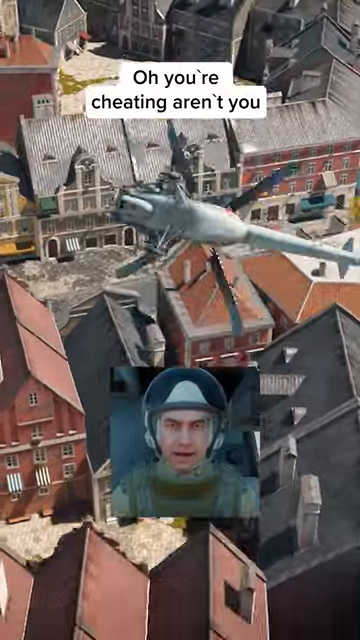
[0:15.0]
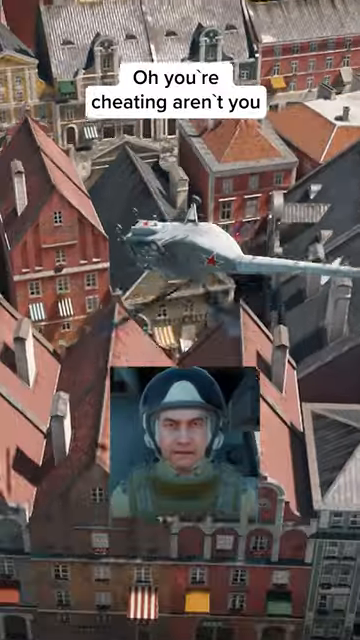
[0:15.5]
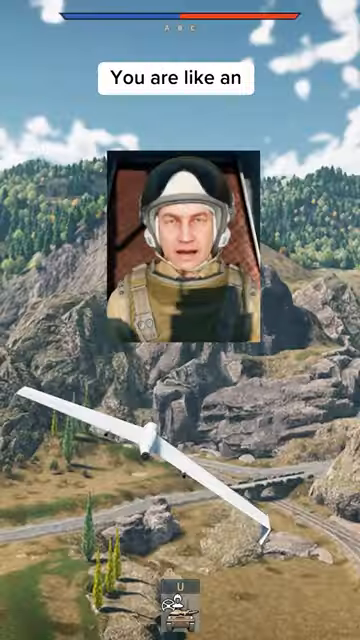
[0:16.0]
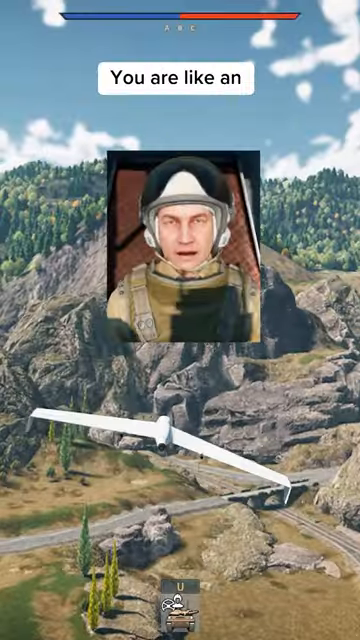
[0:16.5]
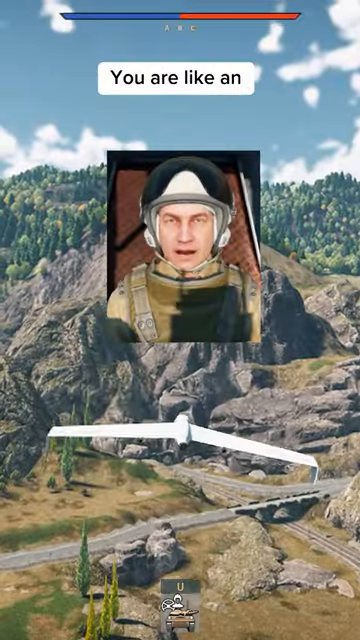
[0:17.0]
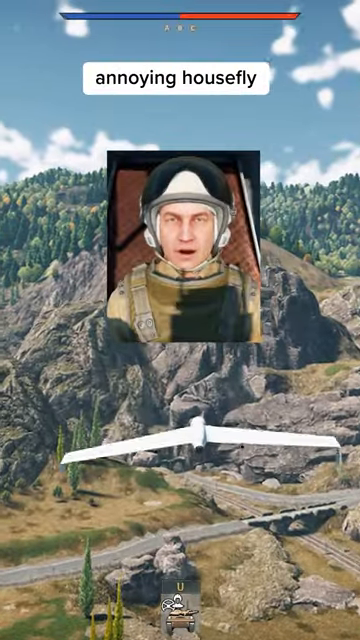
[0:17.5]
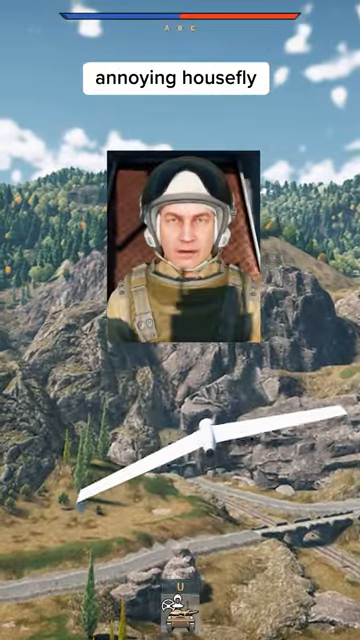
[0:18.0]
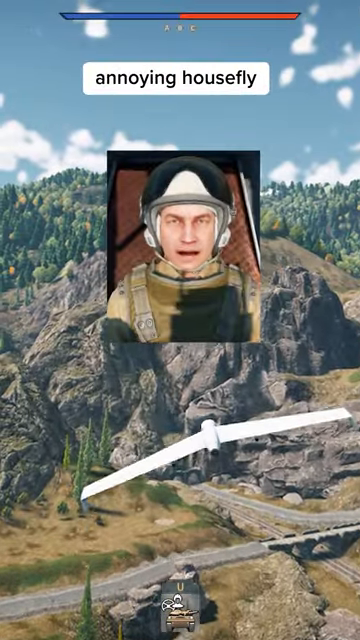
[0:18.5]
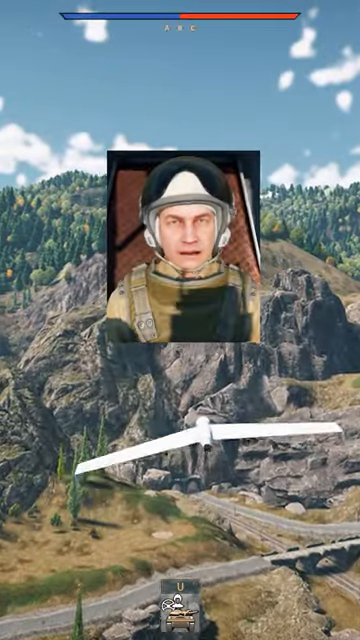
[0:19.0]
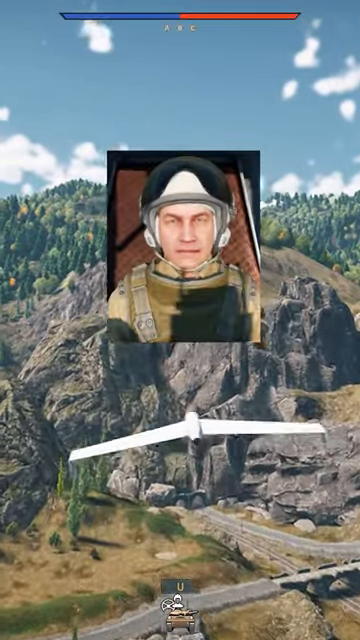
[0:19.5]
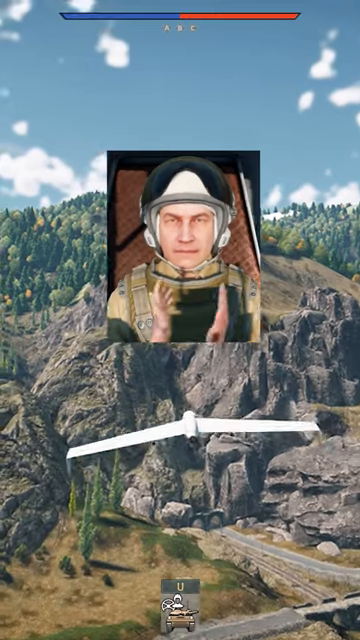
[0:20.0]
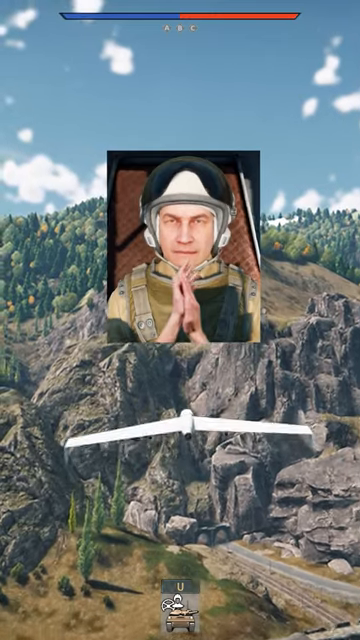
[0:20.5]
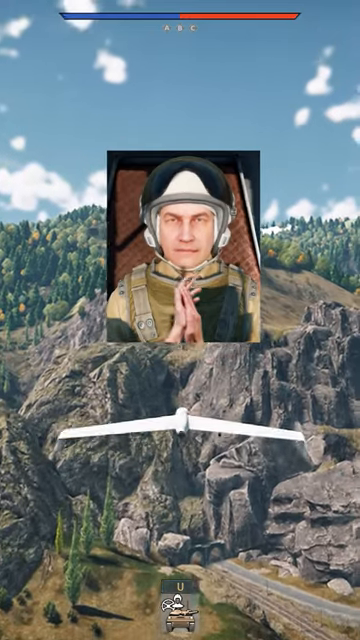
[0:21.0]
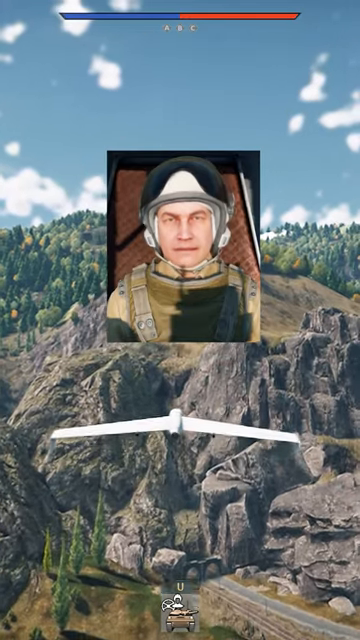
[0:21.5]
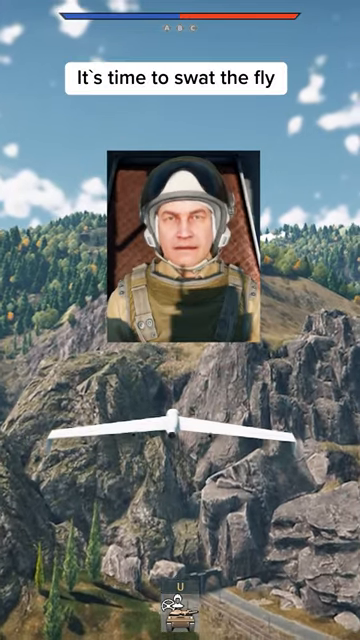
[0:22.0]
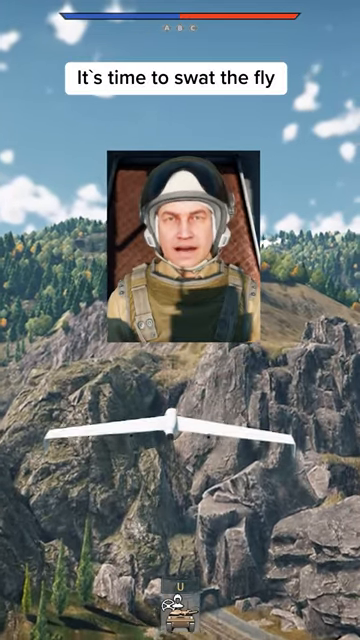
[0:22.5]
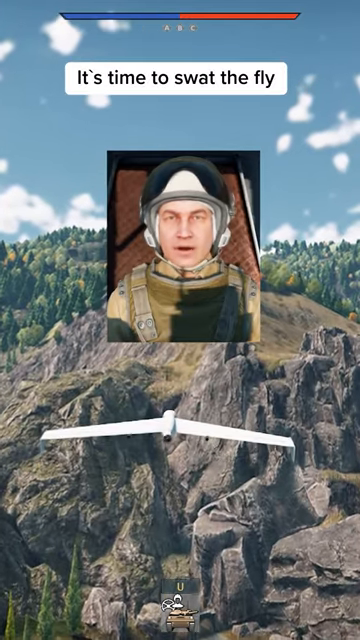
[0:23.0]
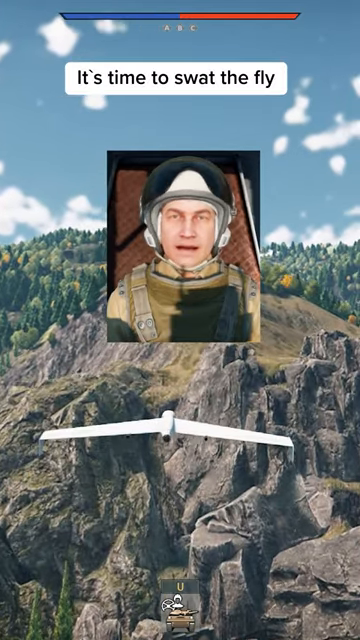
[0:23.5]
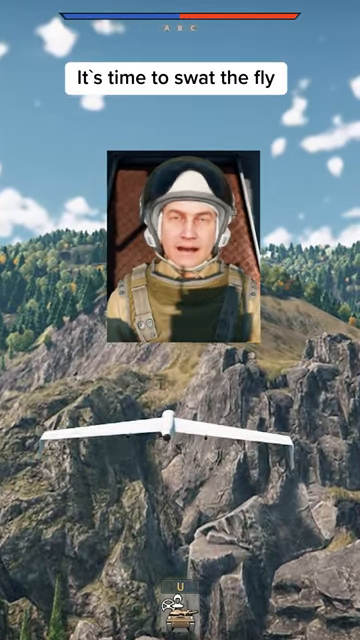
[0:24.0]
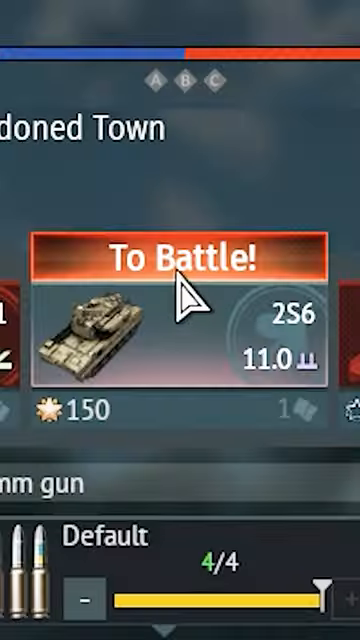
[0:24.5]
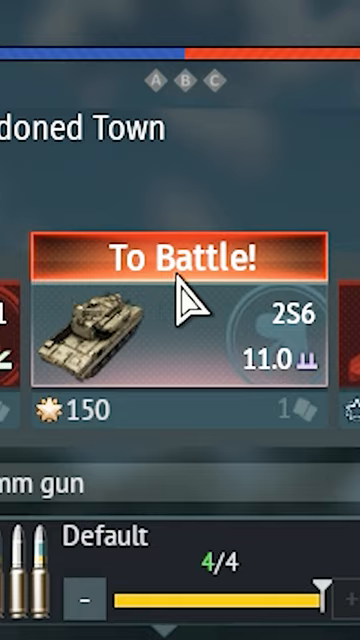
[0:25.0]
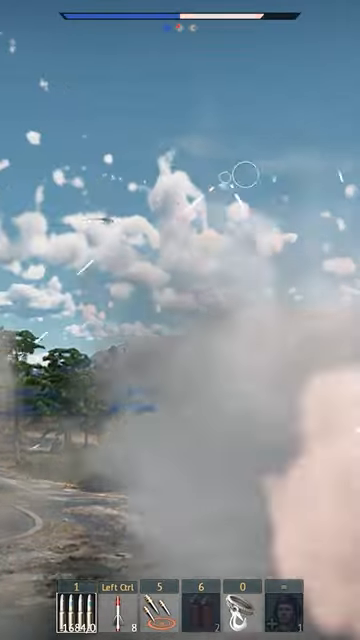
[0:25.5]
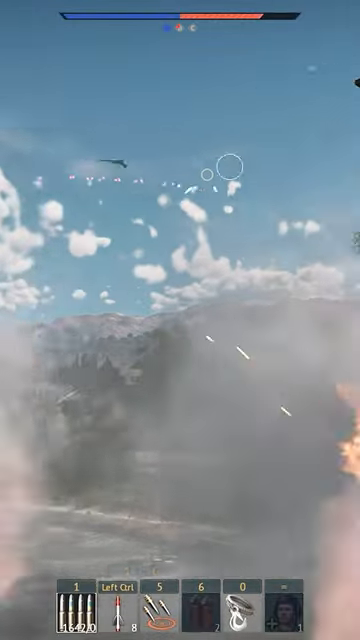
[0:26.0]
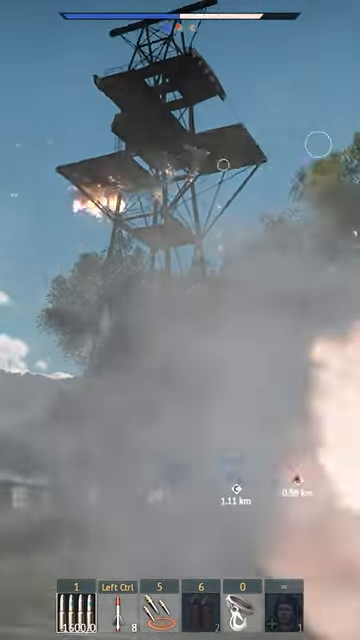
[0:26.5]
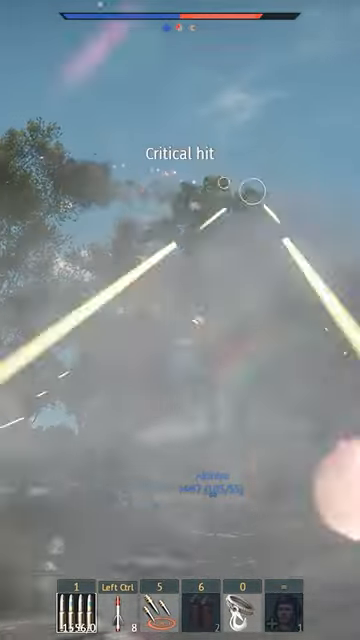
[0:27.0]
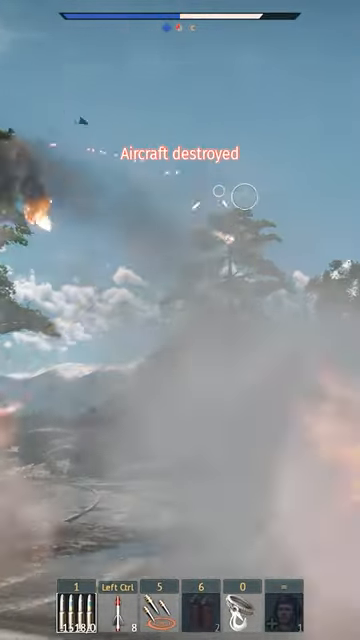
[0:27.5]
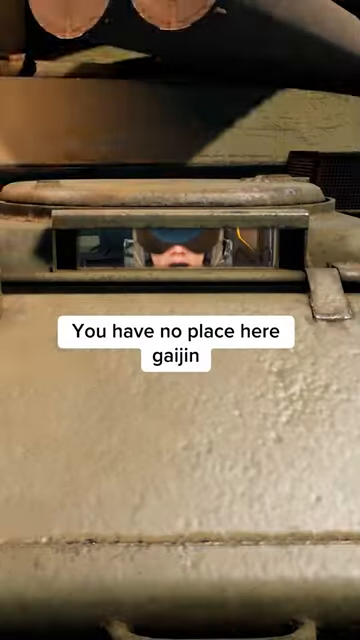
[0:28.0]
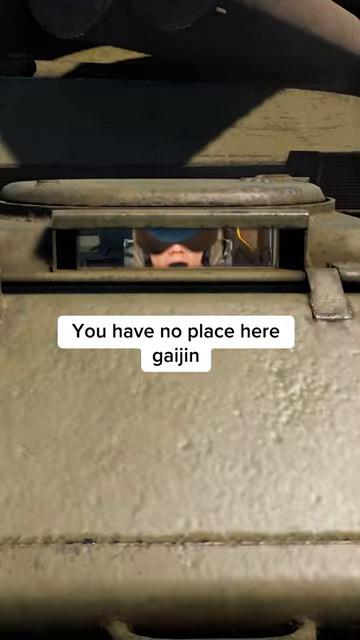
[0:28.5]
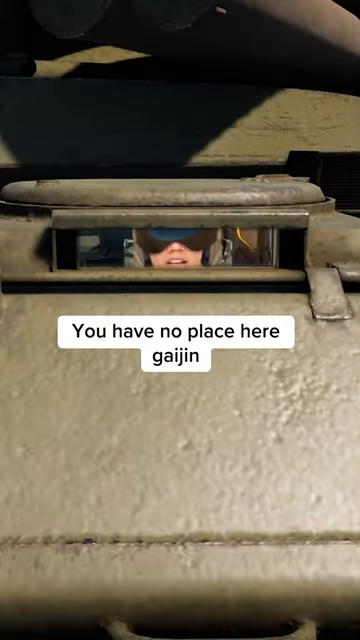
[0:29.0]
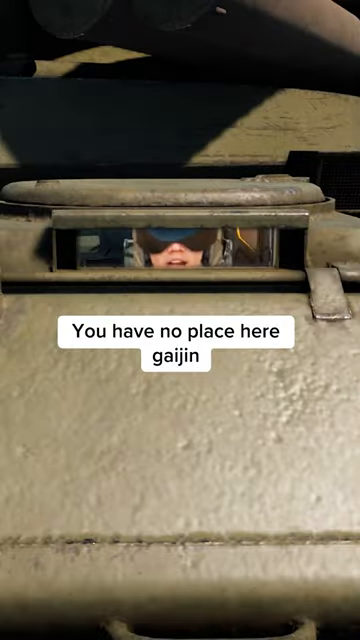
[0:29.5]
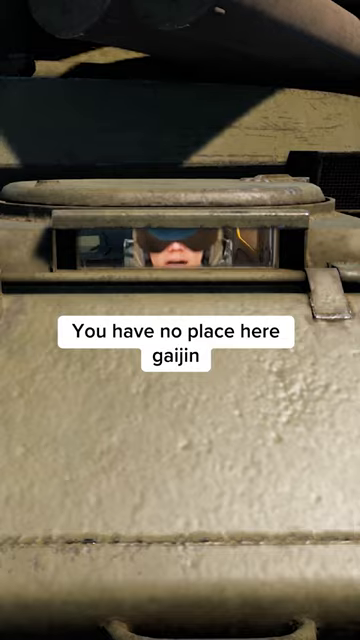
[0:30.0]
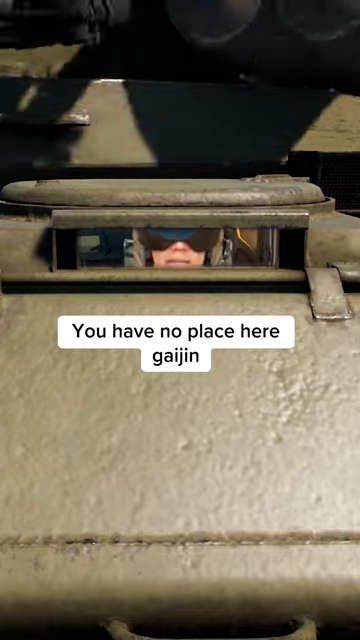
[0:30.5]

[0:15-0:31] A helicopter, somewhat upside down, falls, and the video transitions to a man wearing military gear who appears to have a pair of silver-white headphones or a helmet on. What looks like a white fighter jet moves around, and an animated character appears at the top, putting his hands together as if satisfied. A white banner with black text reads "it's time to swat the fly." The video then transitions to a mouse hovering over a section reading "to battle." In-game currency for a tank shows 150, and other settings for bullets read "defaults 4 out of 4"; the person clicks on it. More explosions follow, with smoke and fire from a gun firing and red text on the screen reading "aircraft destroyed." The video then transitions to a person looking through what seems to be a small hole, with black text reading "you have no place here, Gaijin," and he is talking.